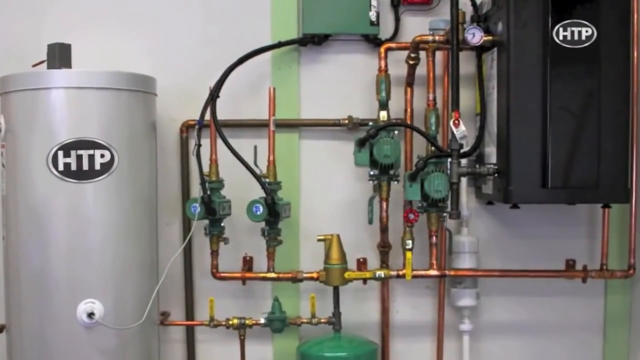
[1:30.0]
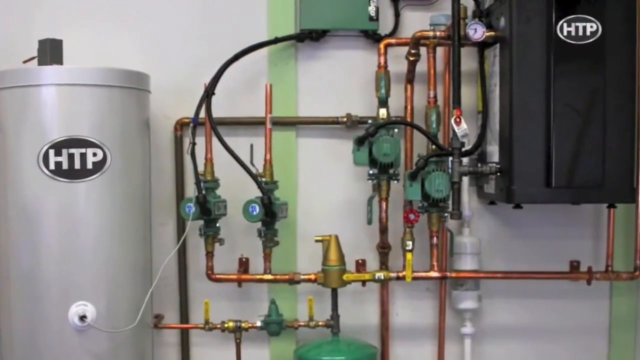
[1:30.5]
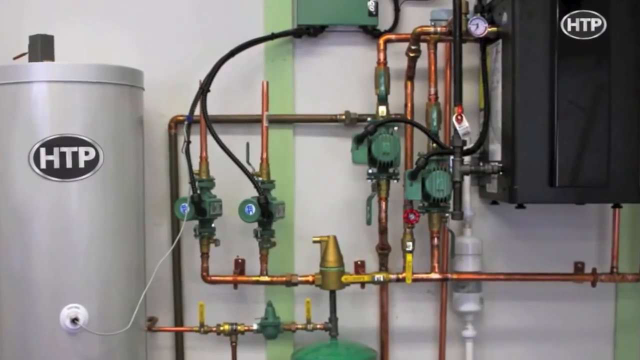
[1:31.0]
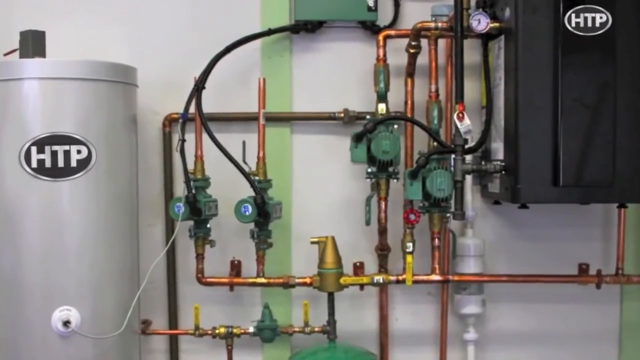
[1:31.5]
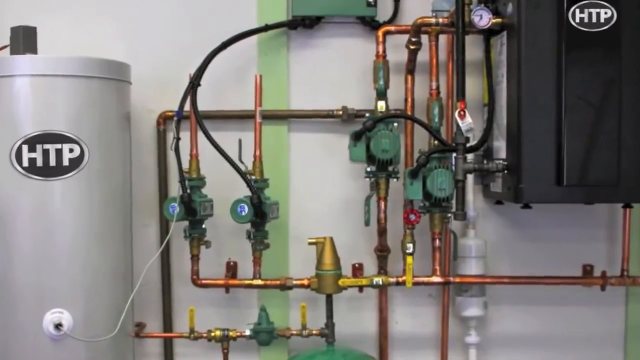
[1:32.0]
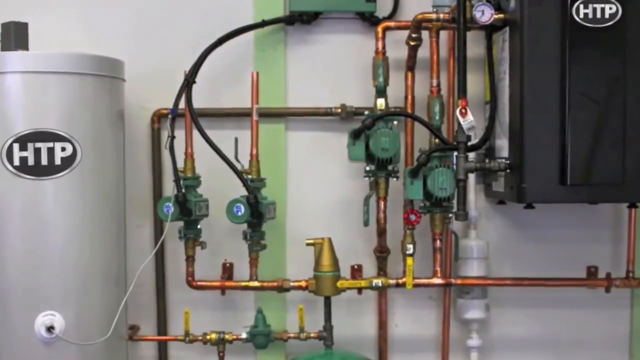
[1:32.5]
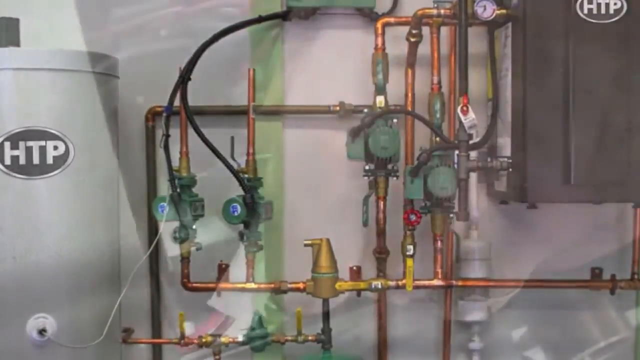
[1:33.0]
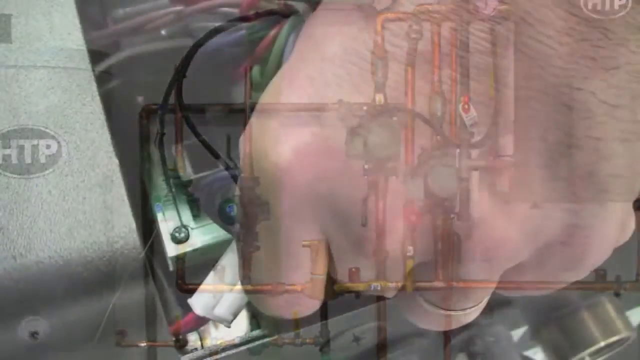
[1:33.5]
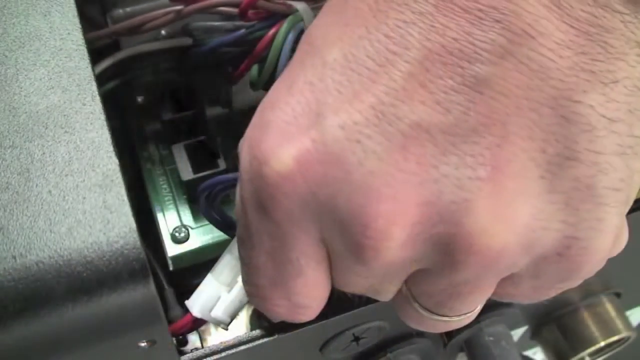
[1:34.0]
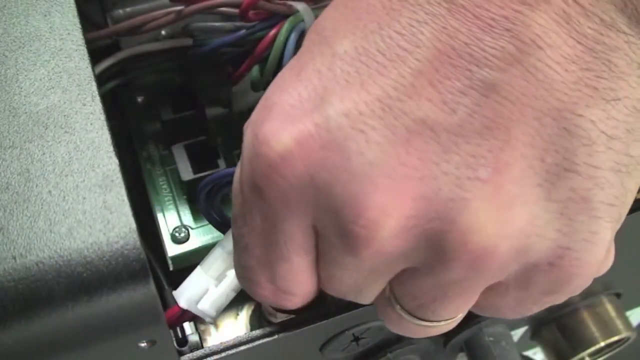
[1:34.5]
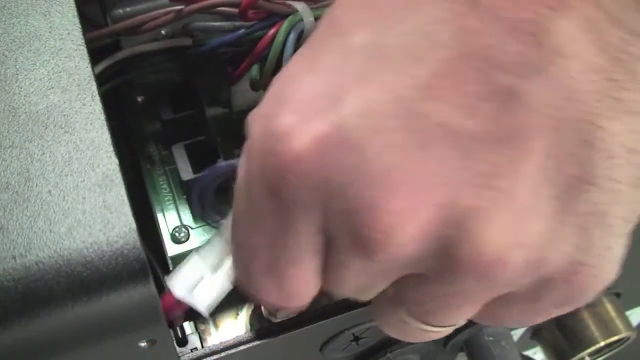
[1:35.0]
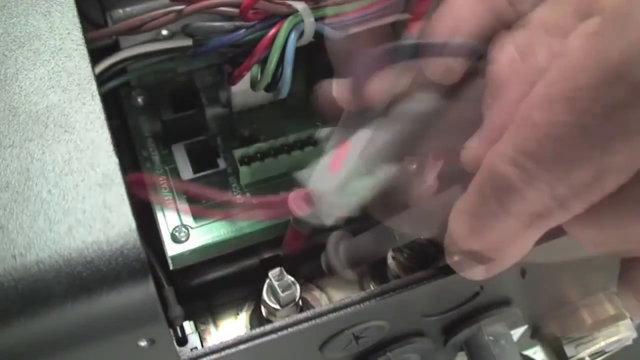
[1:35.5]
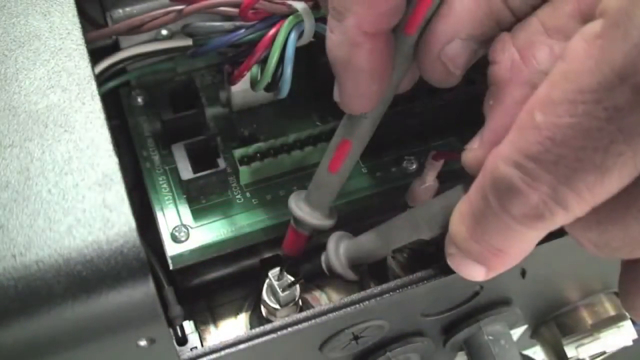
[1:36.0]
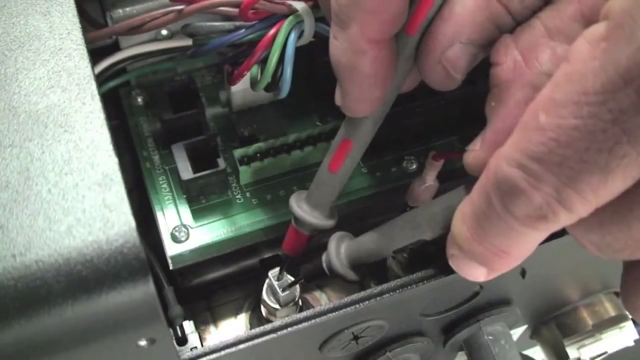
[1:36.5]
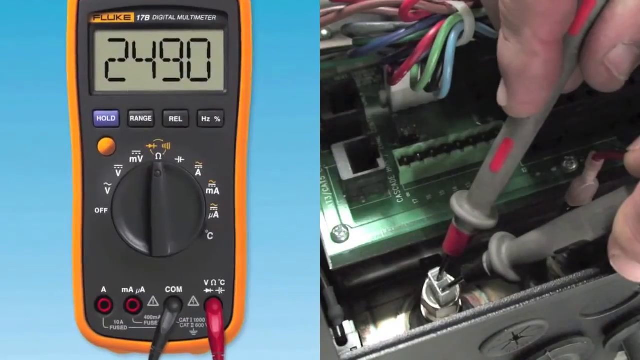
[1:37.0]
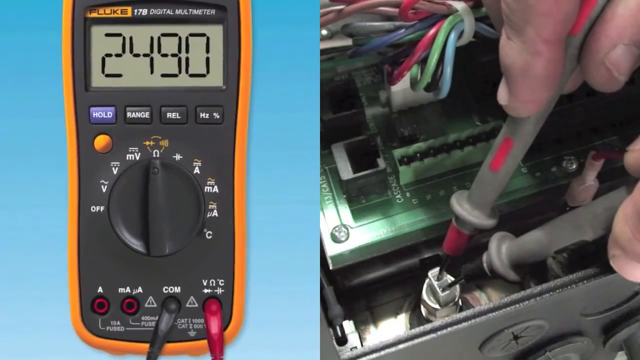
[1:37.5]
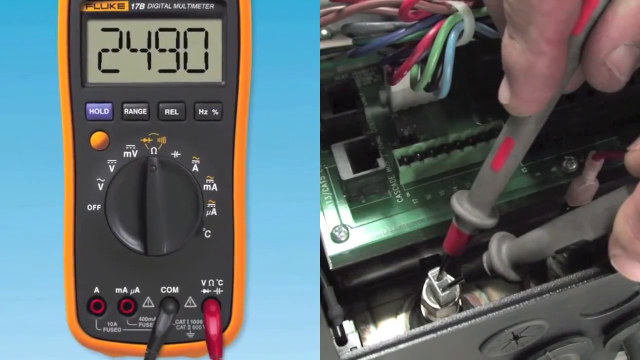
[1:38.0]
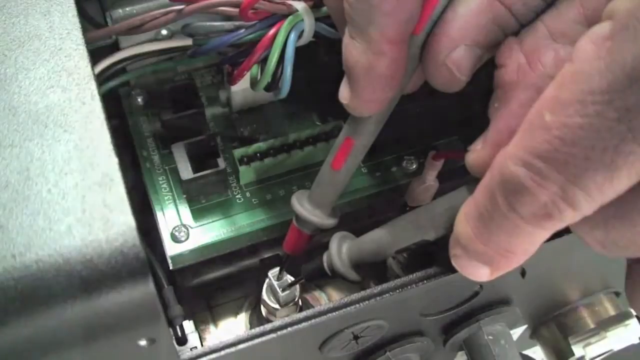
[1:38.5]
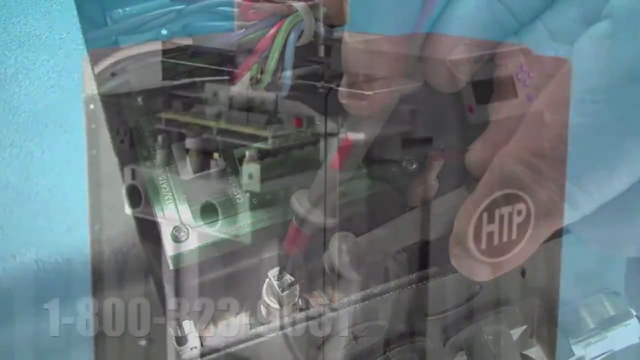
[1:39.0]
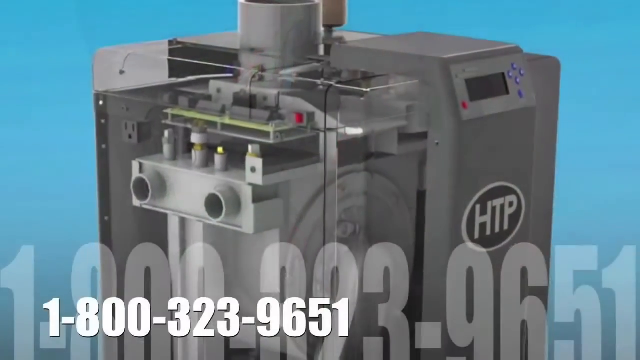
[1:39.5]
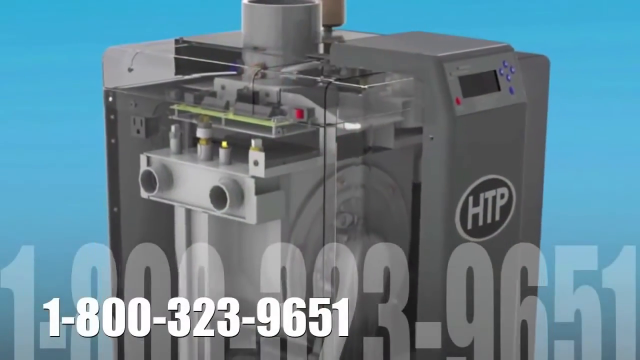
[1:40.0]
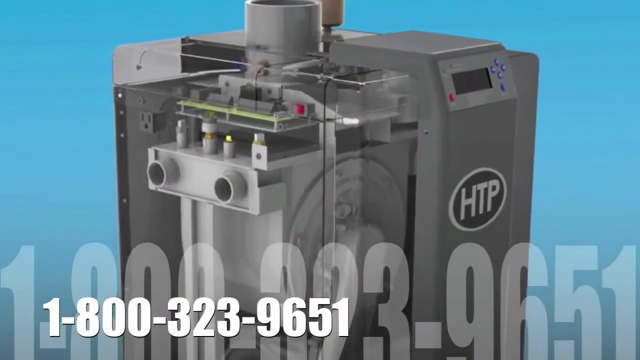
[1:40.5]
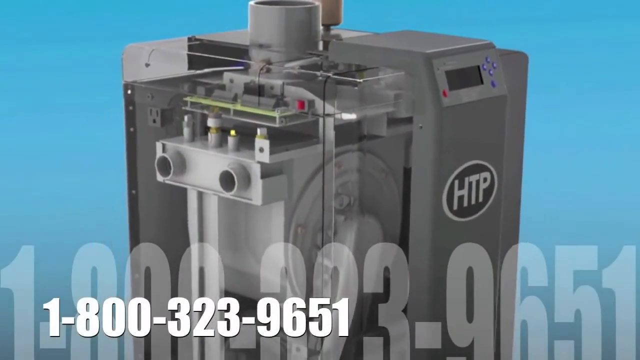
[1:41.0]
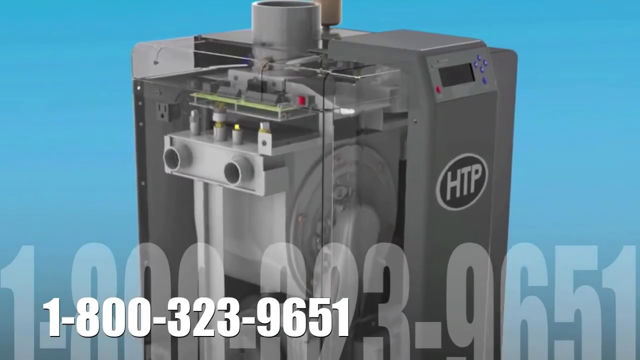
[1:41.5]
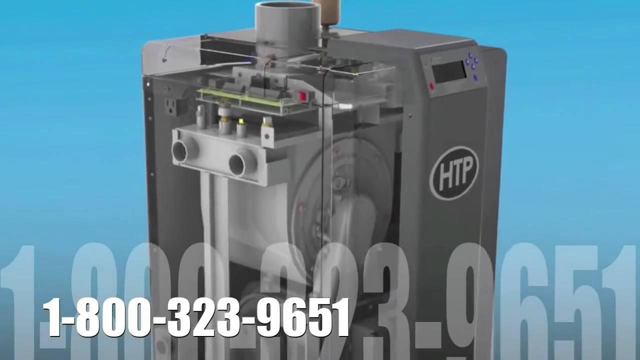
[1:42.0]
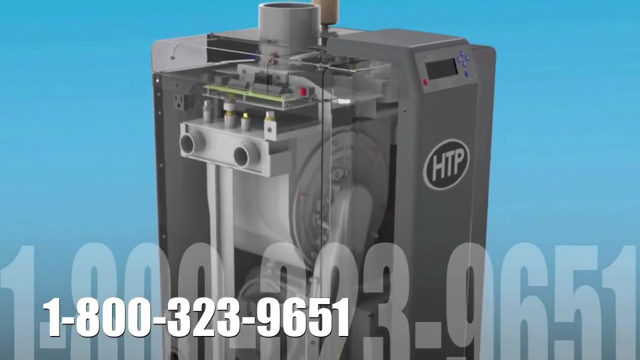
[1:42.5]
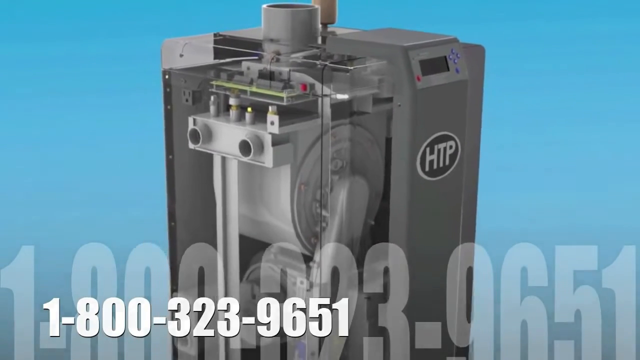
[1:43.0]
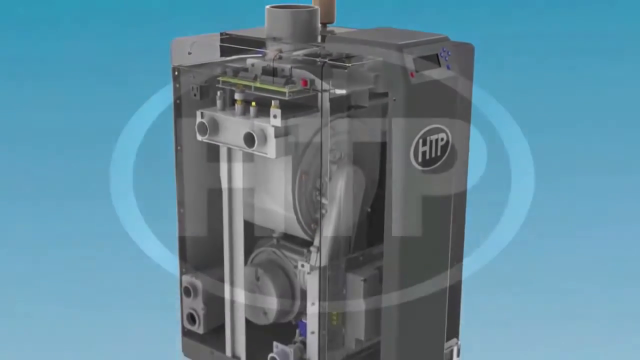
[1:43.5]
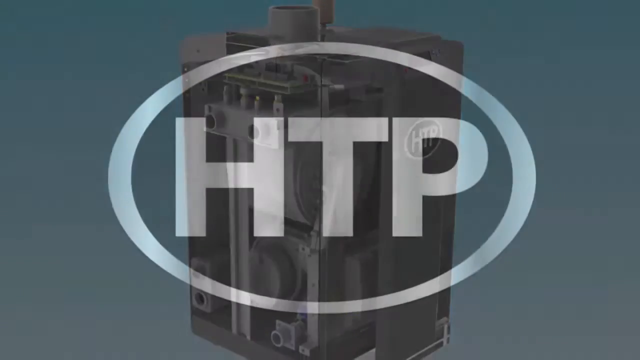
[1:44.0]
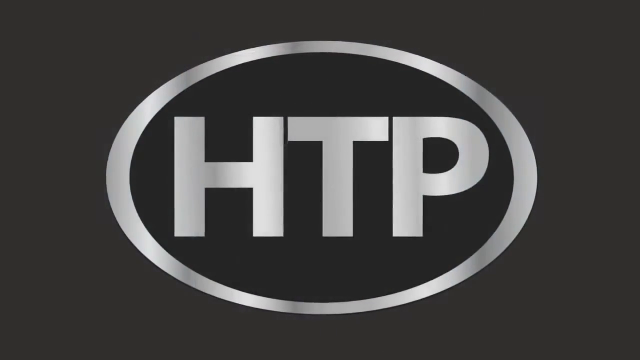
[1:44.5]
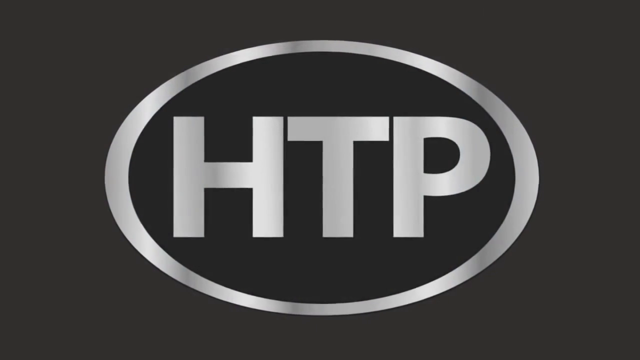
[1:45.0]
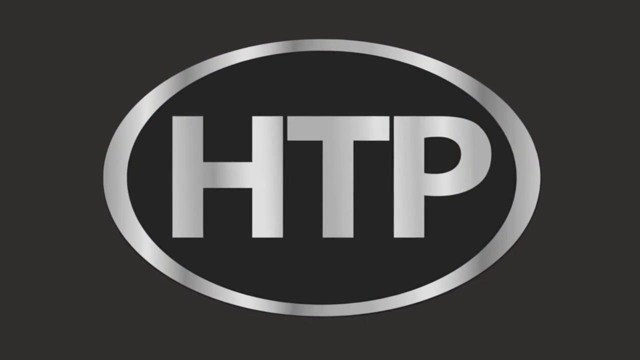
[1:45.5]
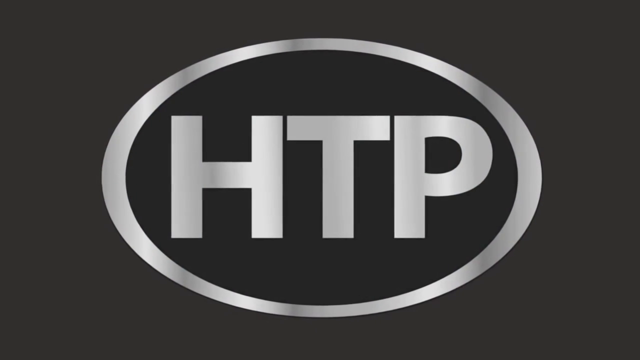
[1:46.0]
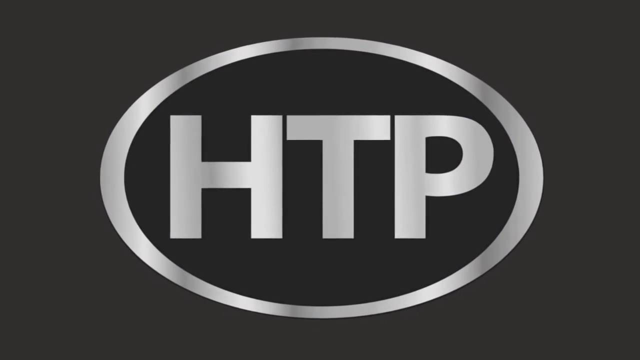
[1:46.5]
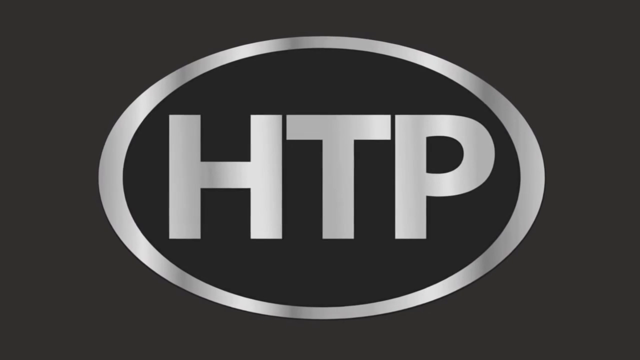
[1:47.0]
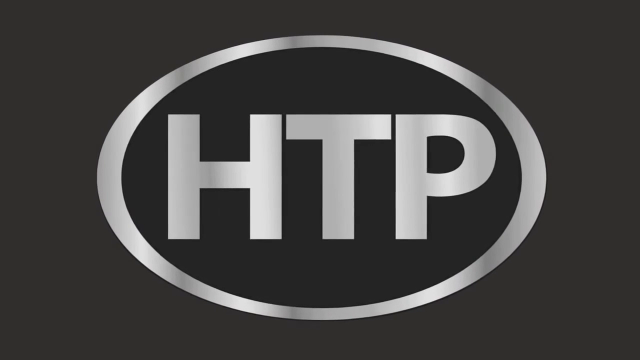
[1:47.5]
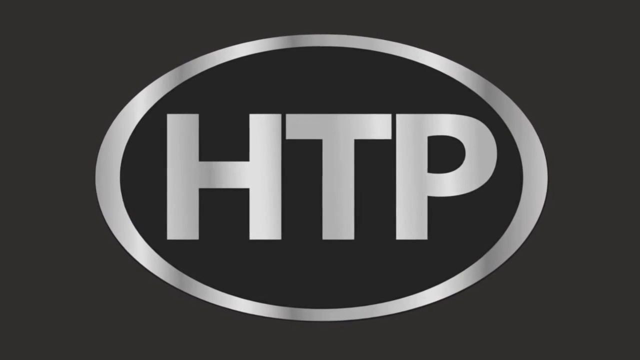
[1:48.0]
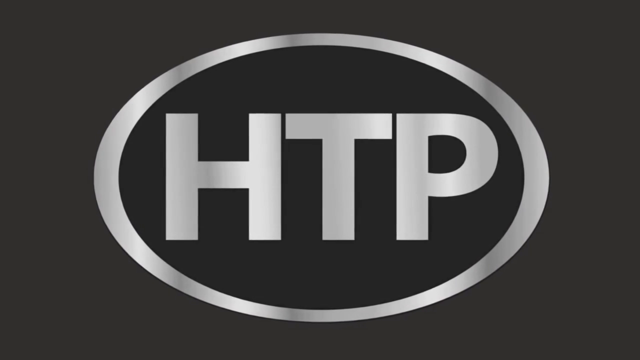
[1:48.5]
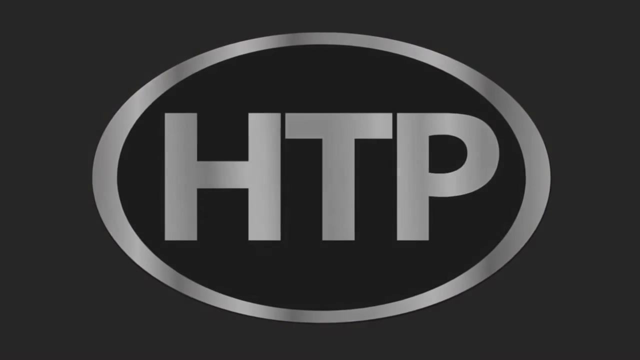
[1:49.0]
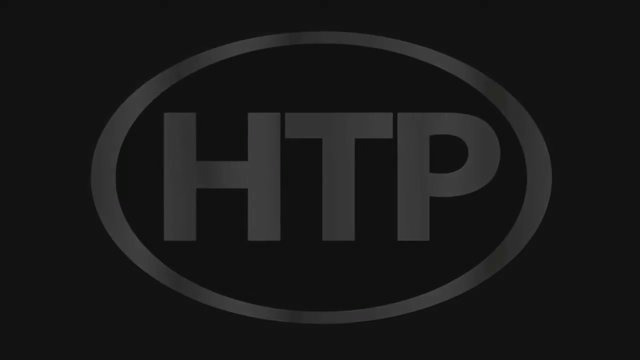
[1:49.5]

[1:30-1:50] The video zooms in closer to the green circular fixtures placed at various junctures along the pipes. It then shows an open box with a bunch of wires, and on the right side someone's hand pulls out one of the wires. Once it is moved, a circuit board is visible inside, and the person holds a red and a black sort of tester, one in each hand. The screen splits in half to show the mechanism that displays the voltage; on the left side it is dark gray with an orange outline, and its display reads "2490". That half of the screen with the voltage tester is then replaced by a large blocky item with "HTP" on it. At the bottom of the screen, text reads "1-800-323-9651", repeated in larger, more faded text behind it, over a robin's egg blue background. The screen then returns to the black and silver screen with the HTP logo.